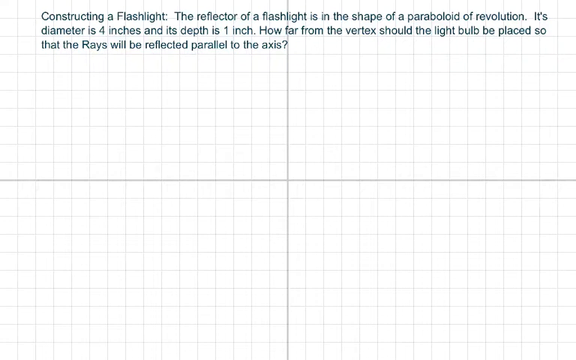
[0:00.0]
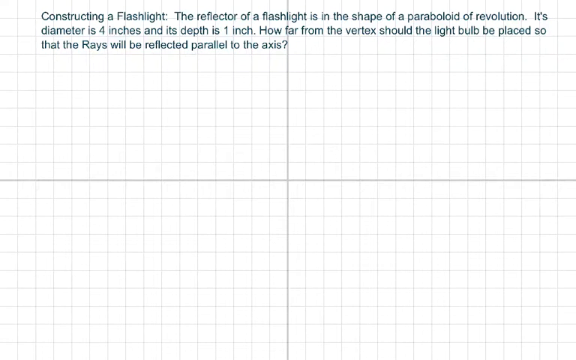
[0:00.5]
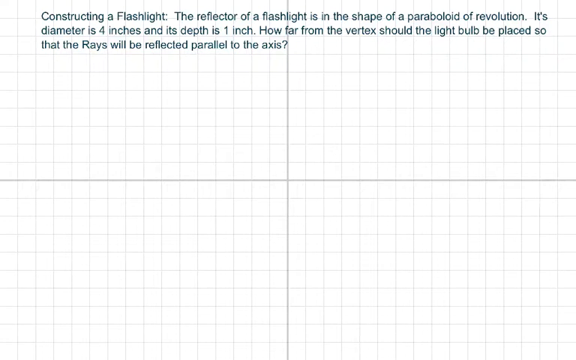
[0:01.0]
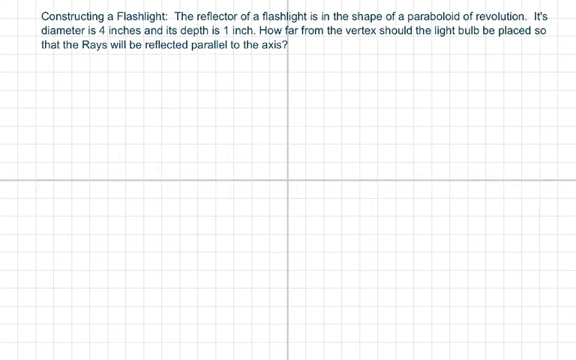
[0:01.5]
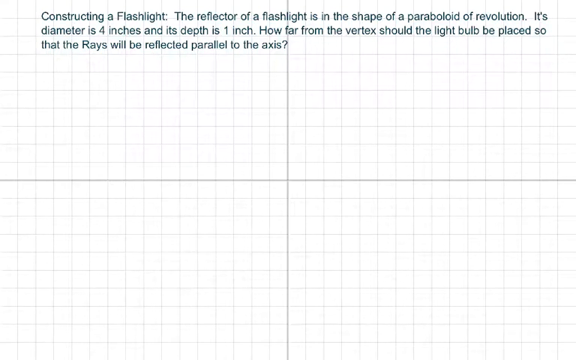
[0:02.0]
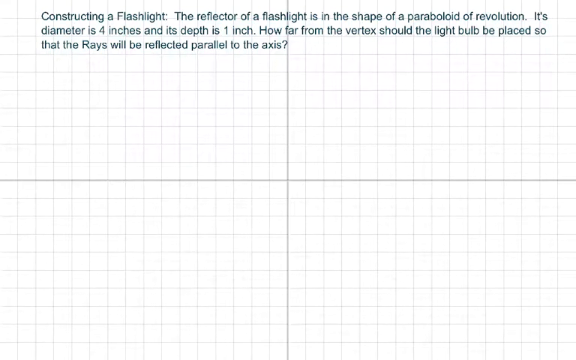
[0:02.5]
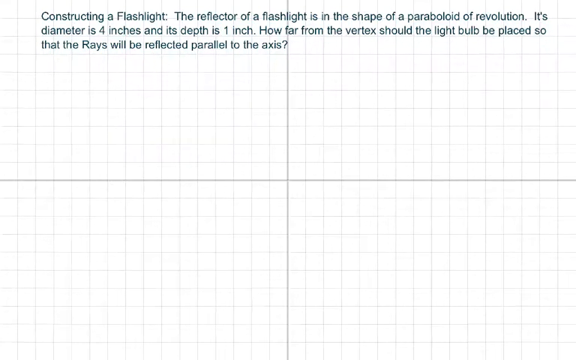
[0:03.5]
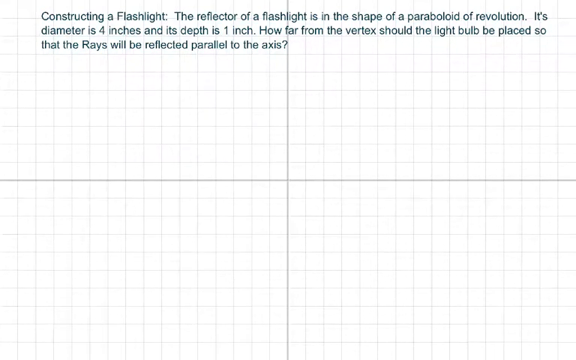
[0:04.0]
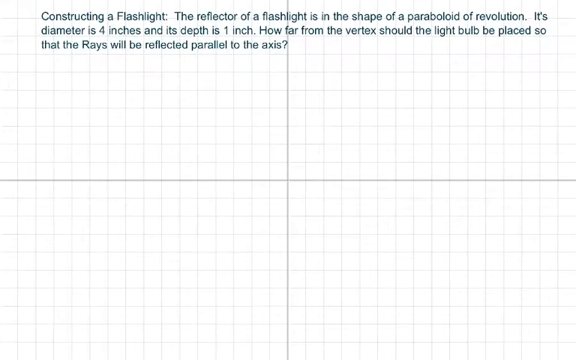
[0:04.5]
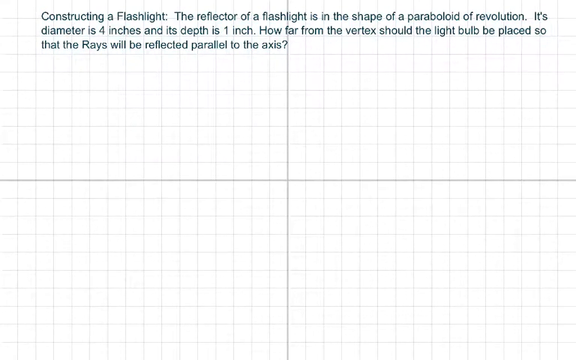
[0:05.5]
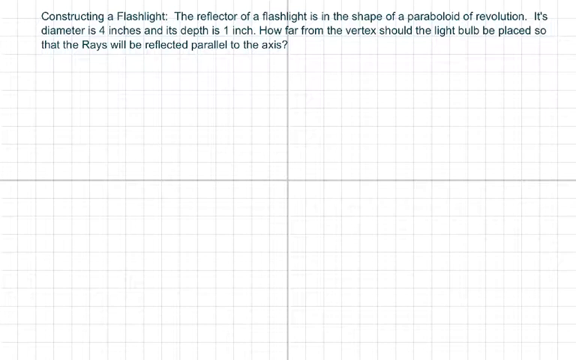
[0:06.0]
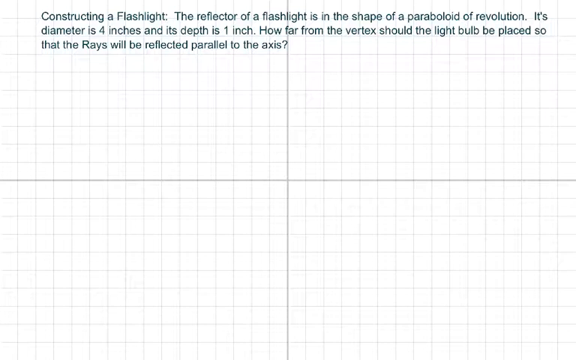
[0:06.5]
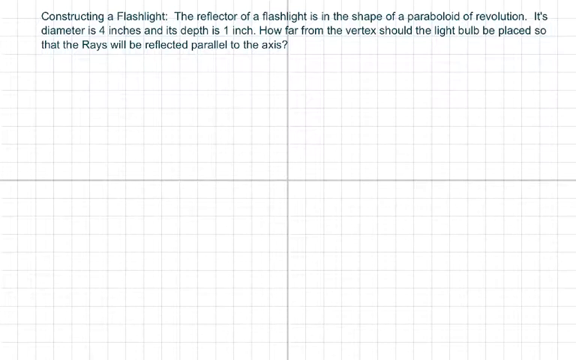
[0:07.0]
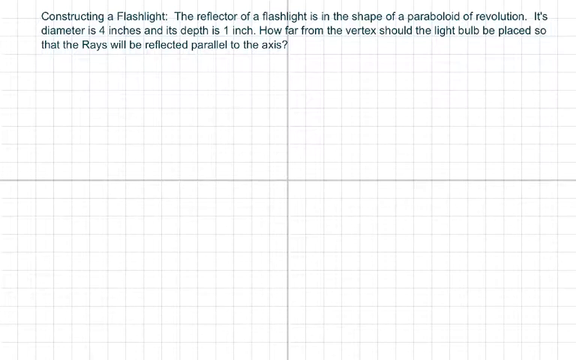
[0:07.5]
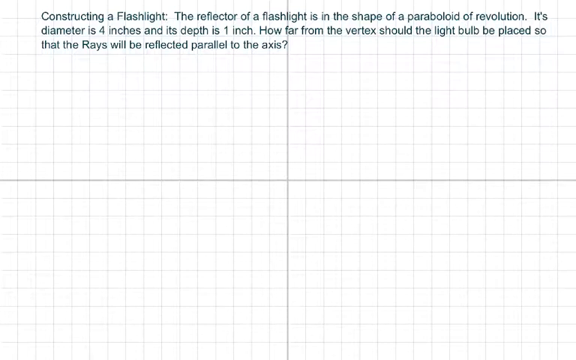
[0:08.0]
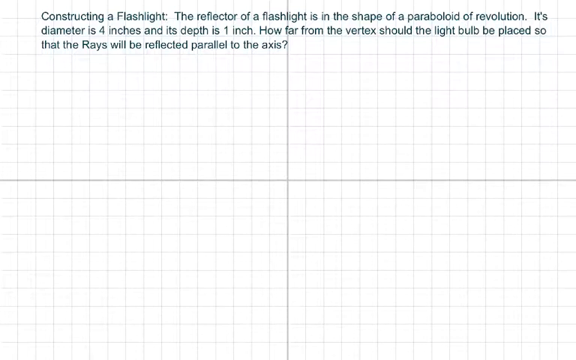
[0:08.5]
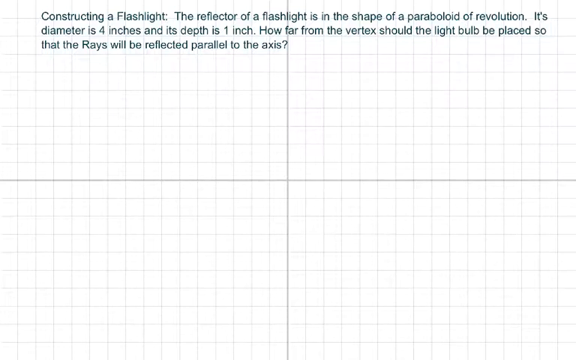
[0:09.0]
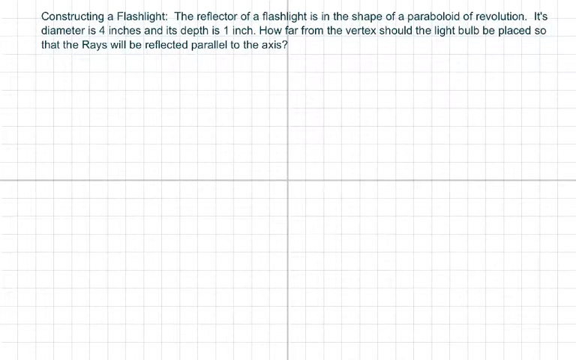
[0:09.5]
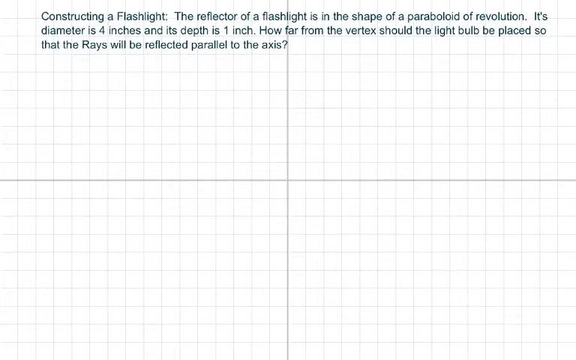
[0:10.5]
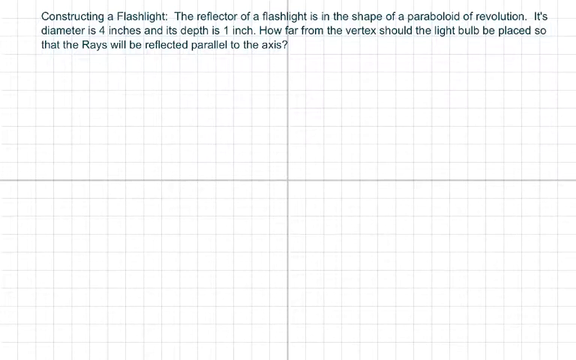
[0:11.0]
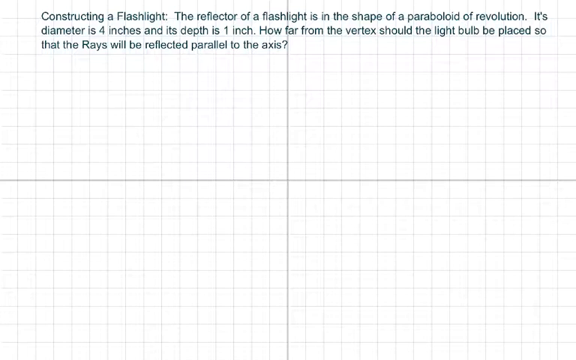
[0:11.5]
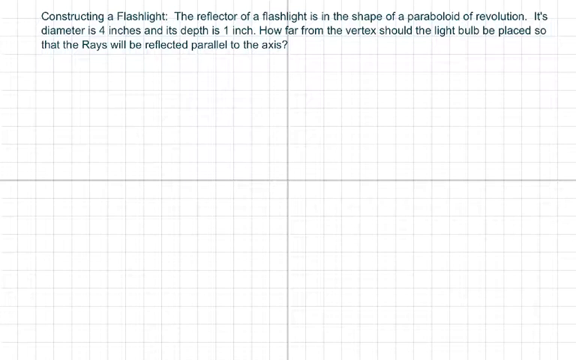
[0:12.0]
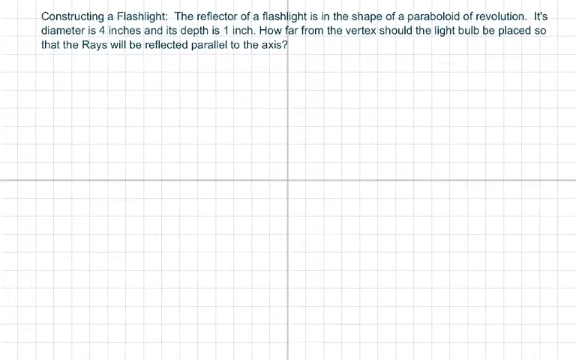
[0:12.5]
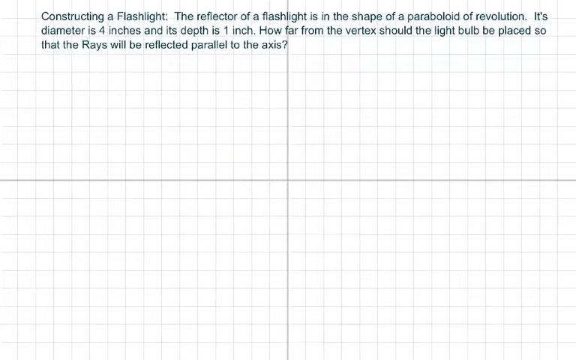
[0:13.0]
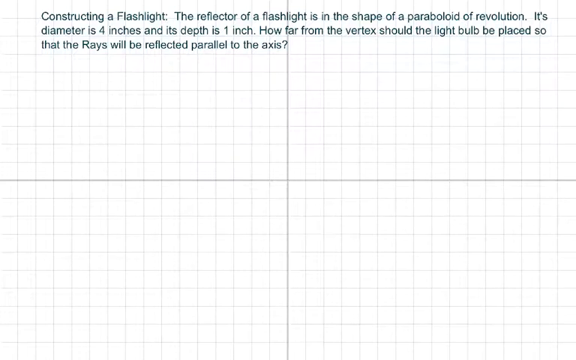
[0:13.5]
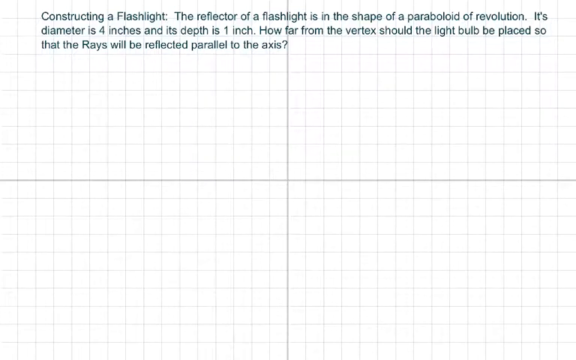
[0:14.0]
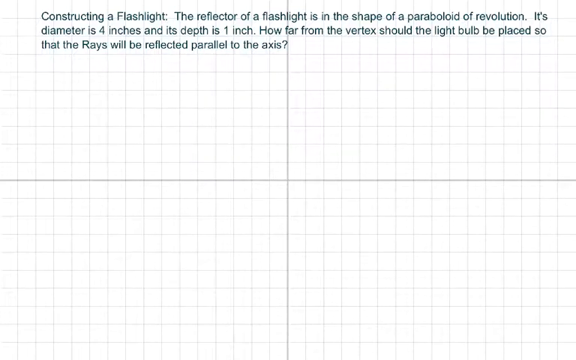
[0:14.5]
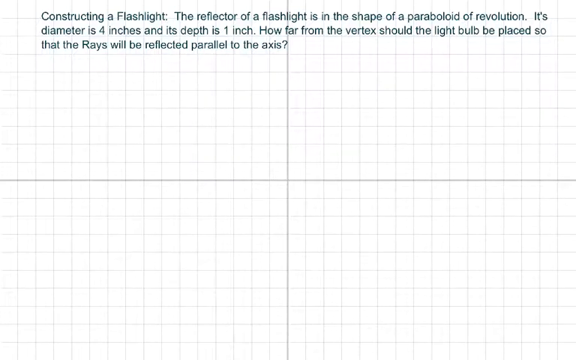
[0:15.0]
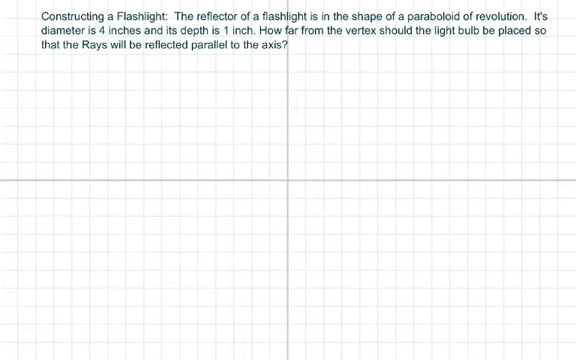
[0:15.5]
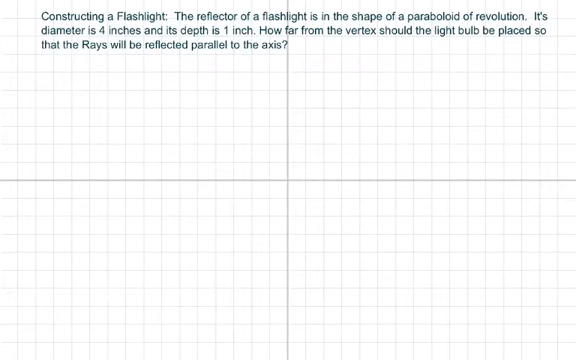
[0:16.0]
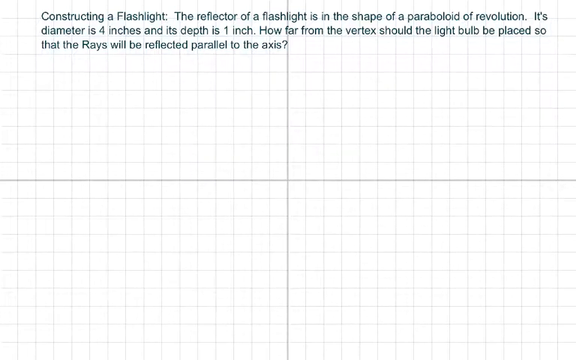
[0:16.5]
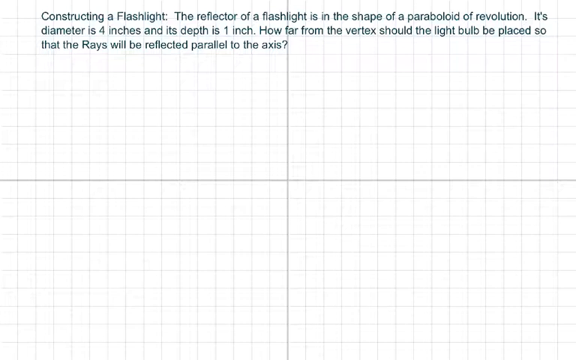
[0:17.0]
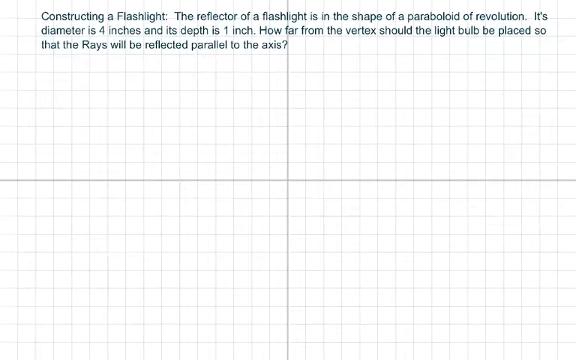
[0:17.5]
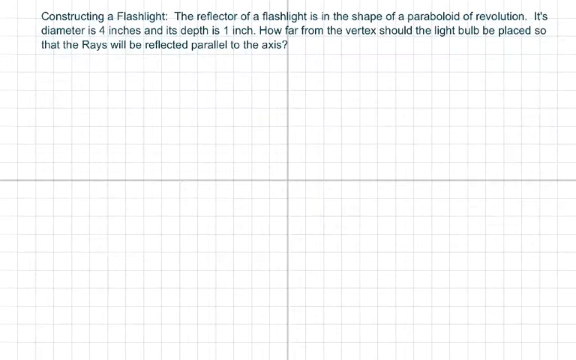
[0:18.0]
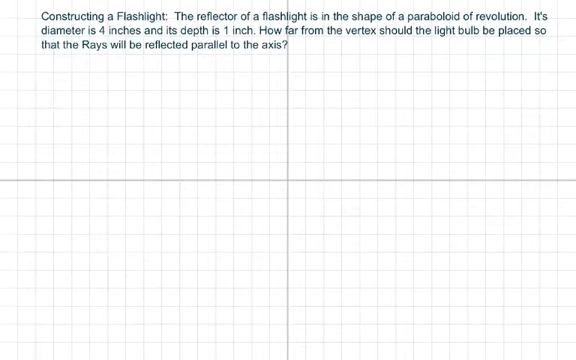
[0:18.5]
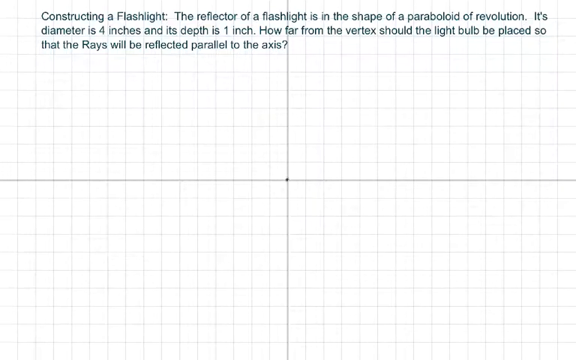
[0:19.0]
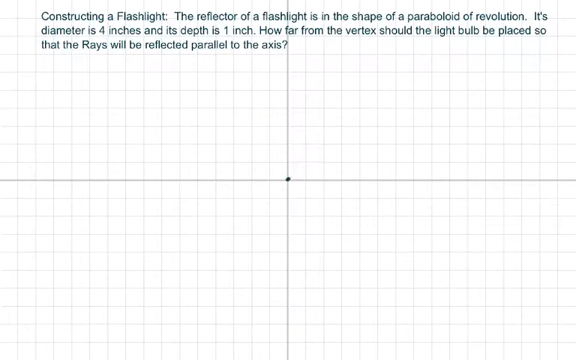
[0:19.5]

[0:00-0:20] Information is written in a green font on a background of small boxes. Two lines are drawn across the small boxes, one going from north to south and one going from east to west, dividing the background into four boxes. The view zooms in and out. The person then writes a dot in the middle, where the lines meet.